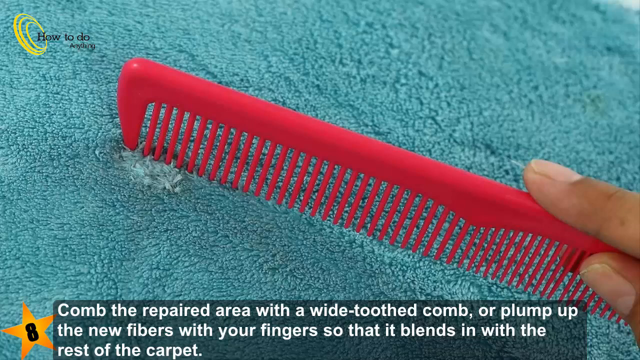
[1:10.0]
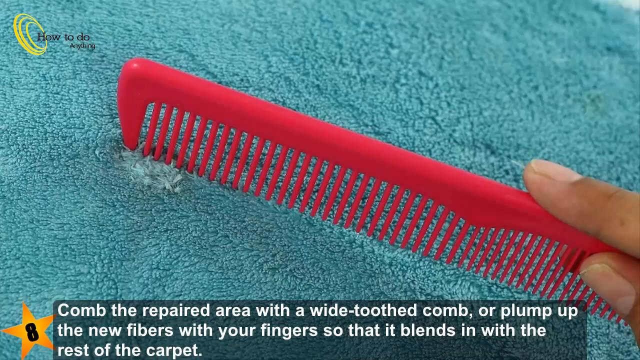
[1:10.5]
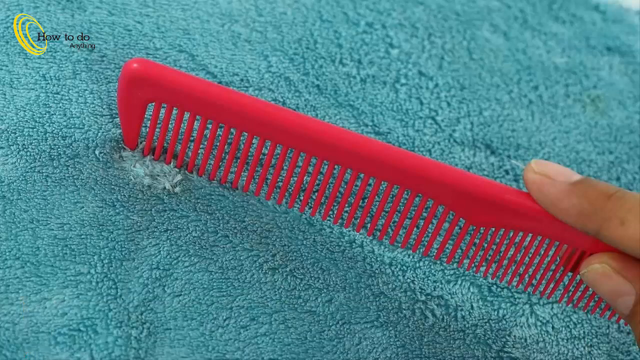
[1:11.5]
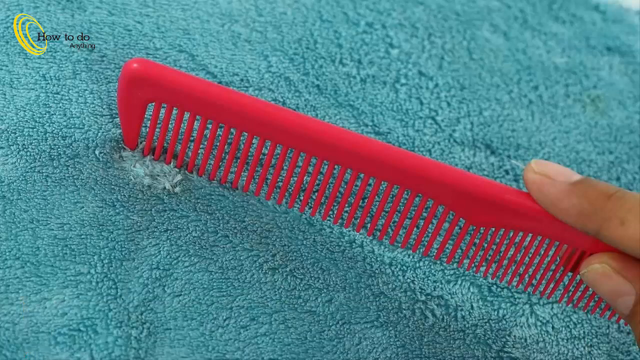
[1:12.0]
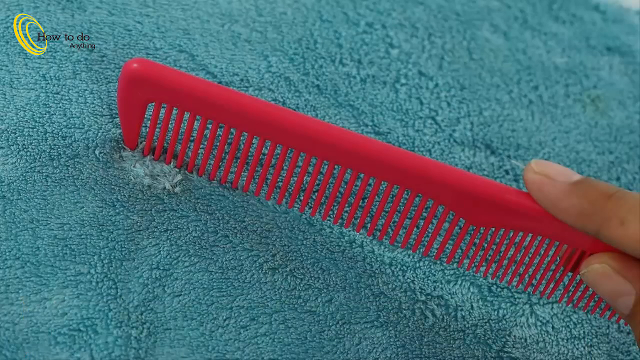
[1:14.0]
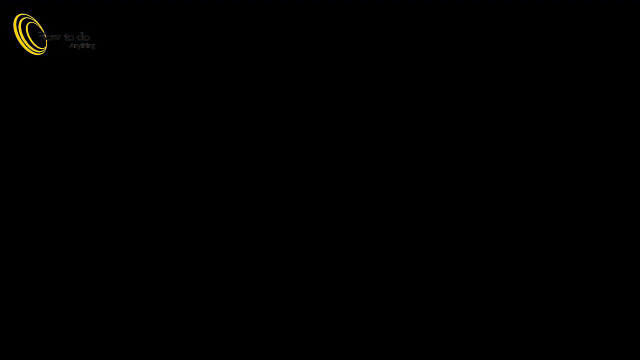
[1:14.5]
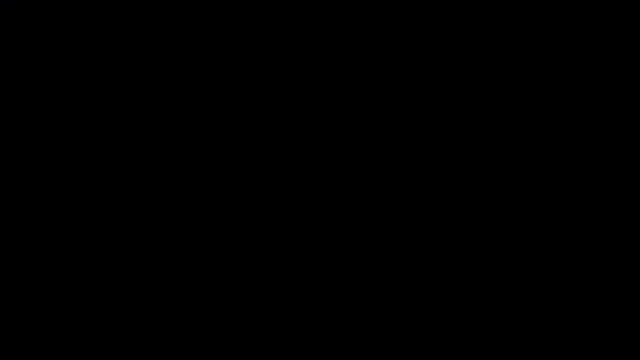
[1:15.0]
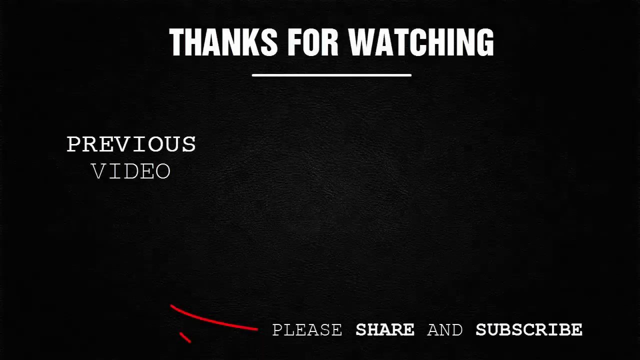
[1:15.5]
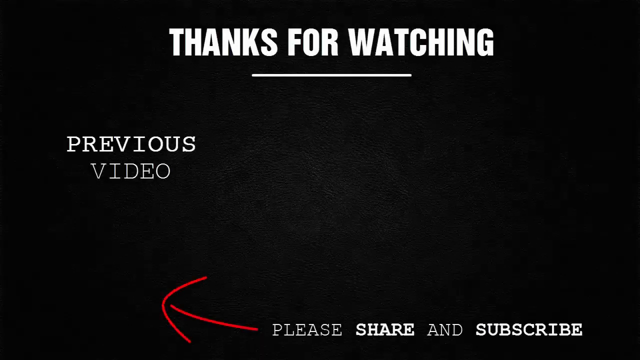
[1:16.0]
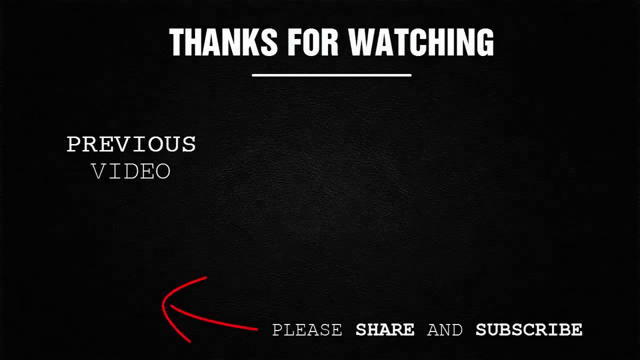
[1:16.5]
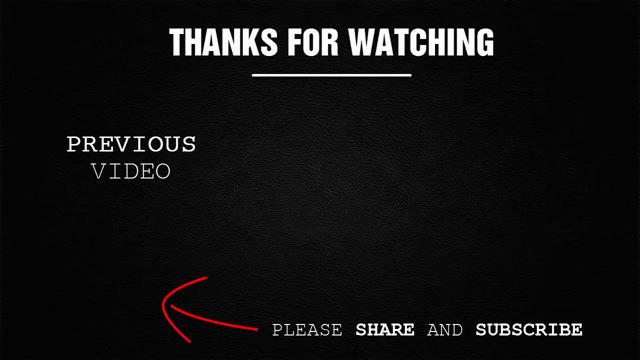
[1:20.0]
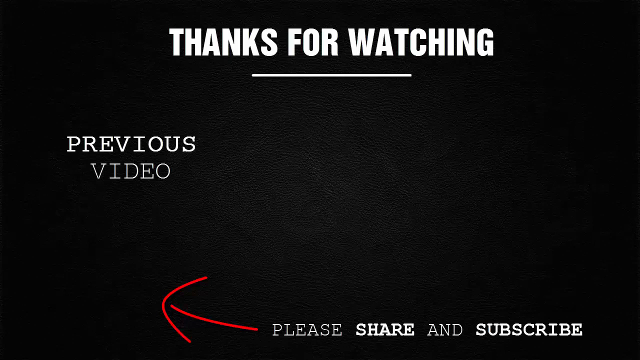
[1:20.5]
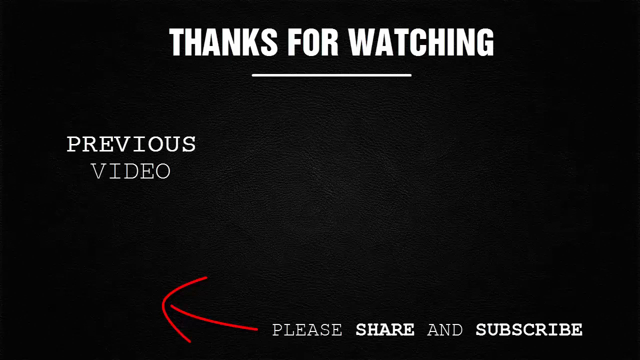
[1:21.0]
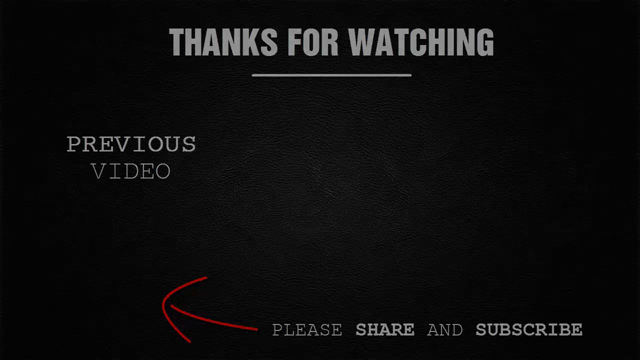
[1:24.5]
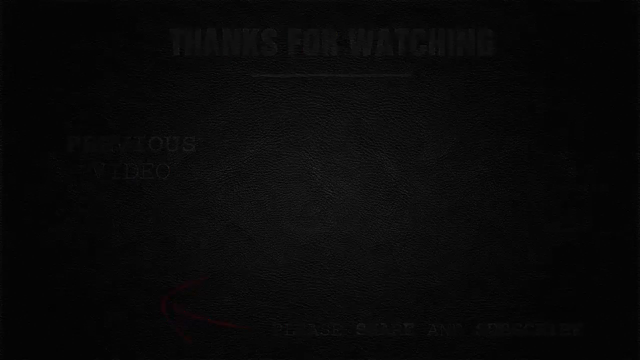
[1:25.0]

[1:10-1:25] Rubbing with the comb continues on the repaired part. The person holds a red comb with white teeth and keeps rubbing the new fibers, with glue underneath so that they stick to the mat. A statement appears saying "thanks for watching".